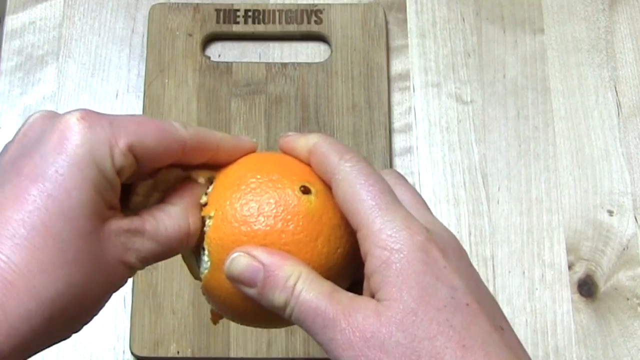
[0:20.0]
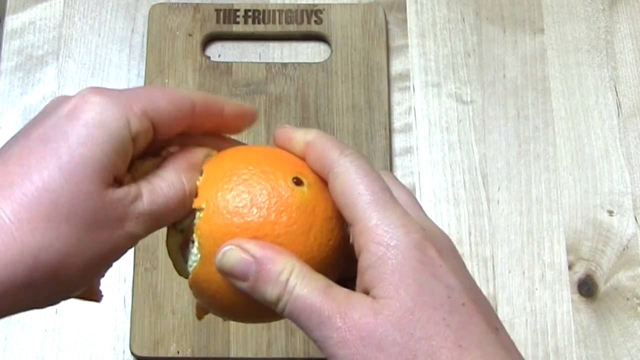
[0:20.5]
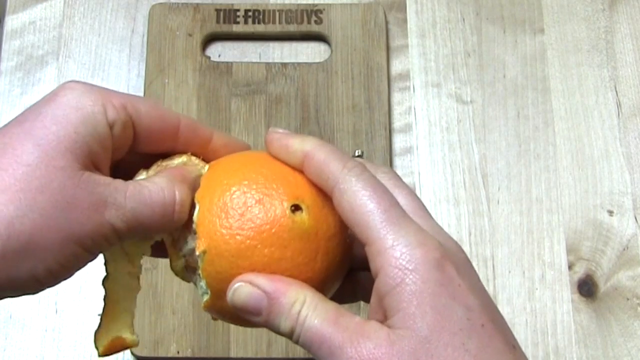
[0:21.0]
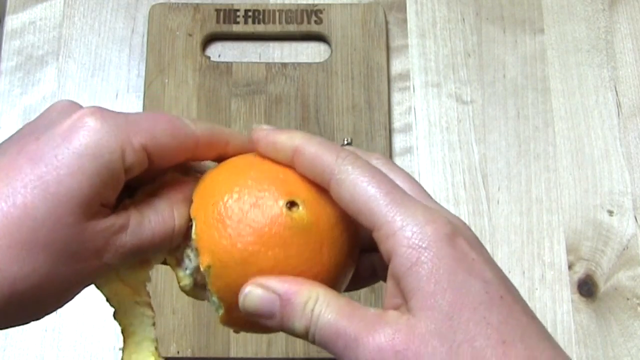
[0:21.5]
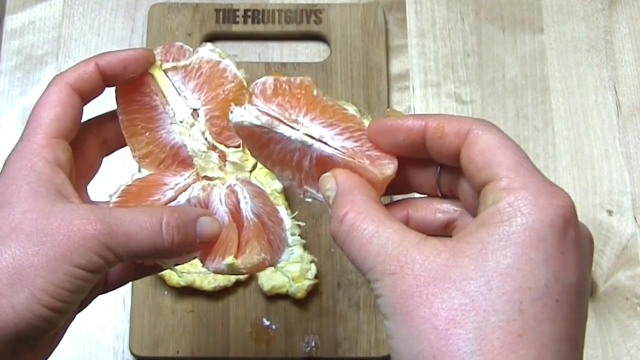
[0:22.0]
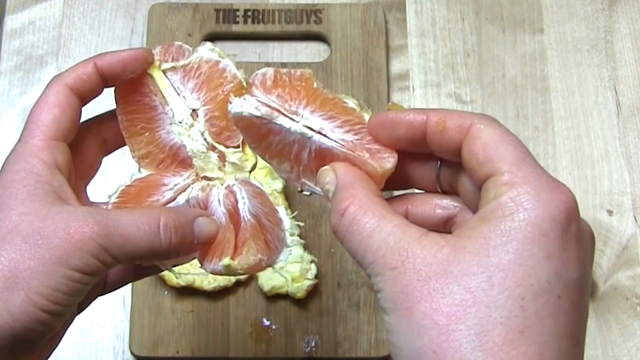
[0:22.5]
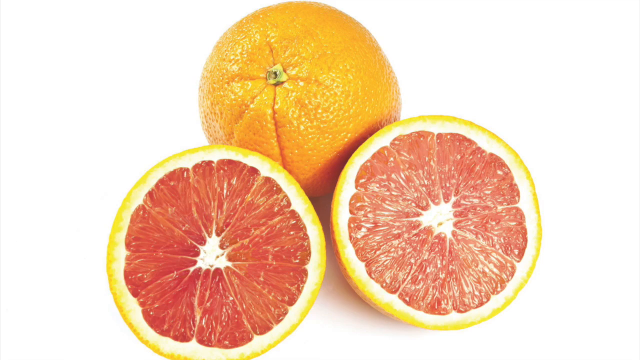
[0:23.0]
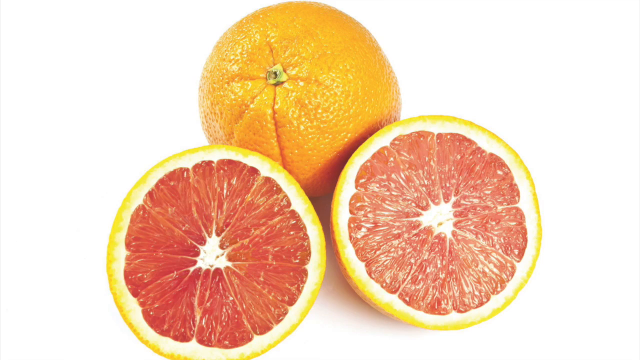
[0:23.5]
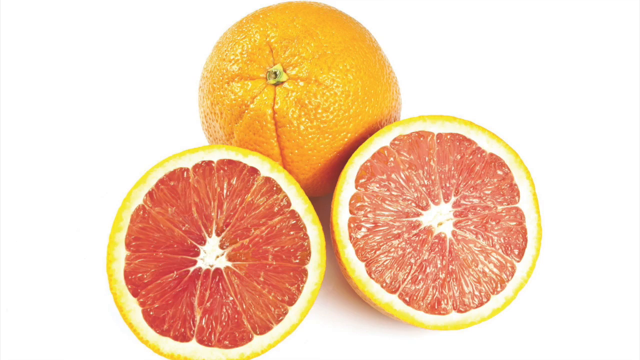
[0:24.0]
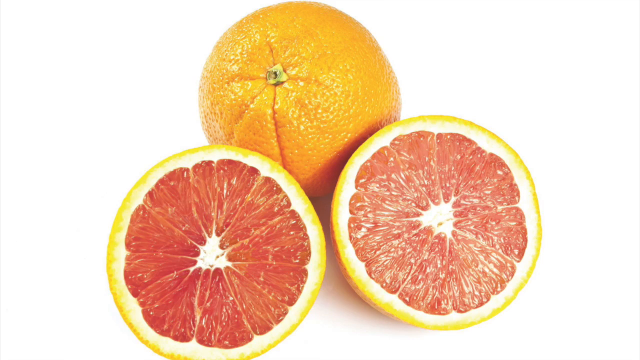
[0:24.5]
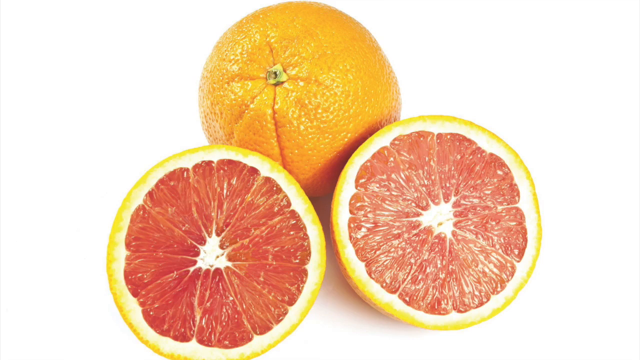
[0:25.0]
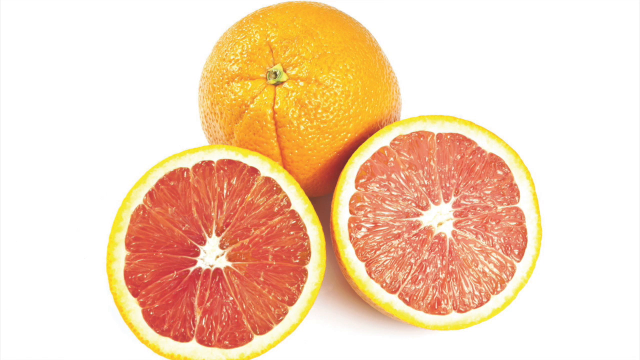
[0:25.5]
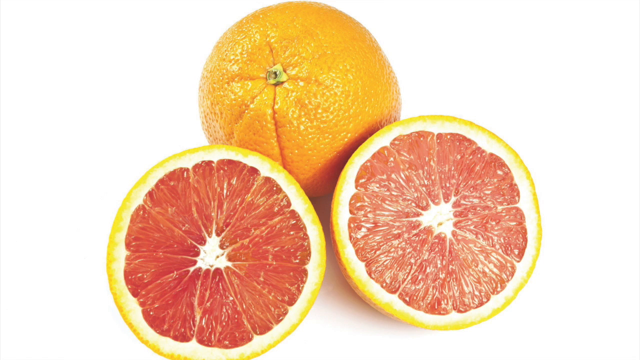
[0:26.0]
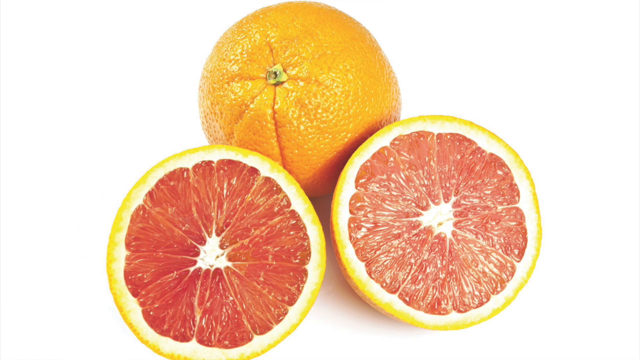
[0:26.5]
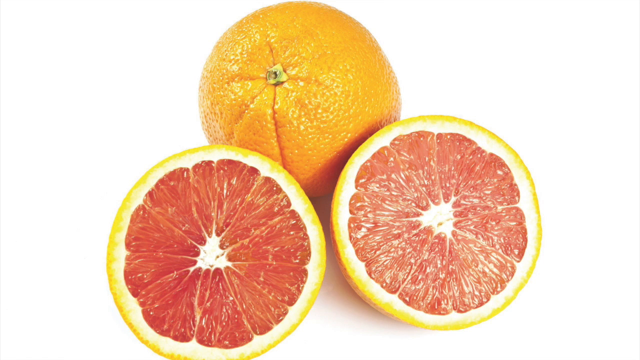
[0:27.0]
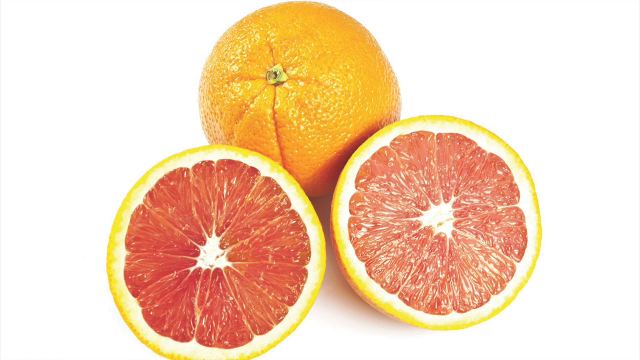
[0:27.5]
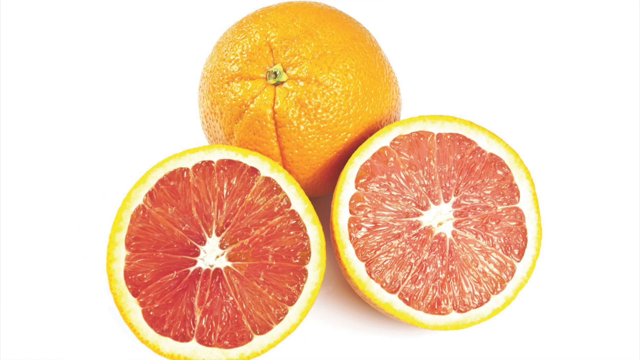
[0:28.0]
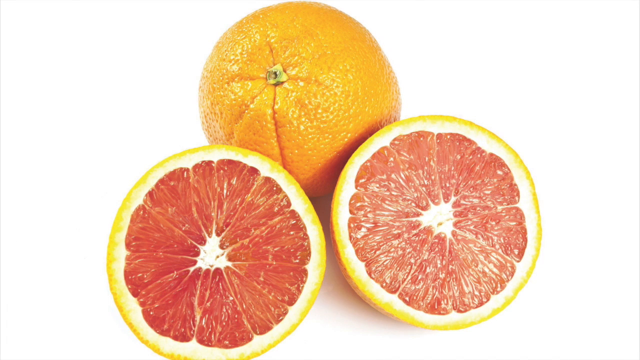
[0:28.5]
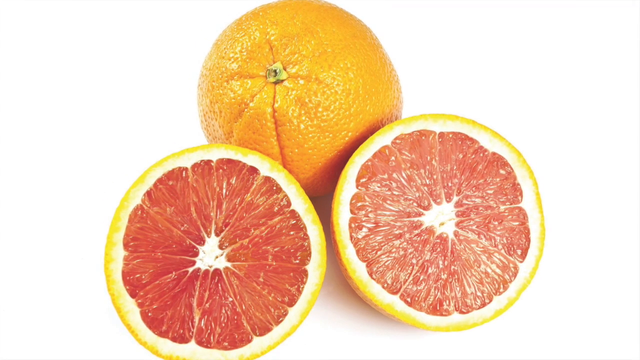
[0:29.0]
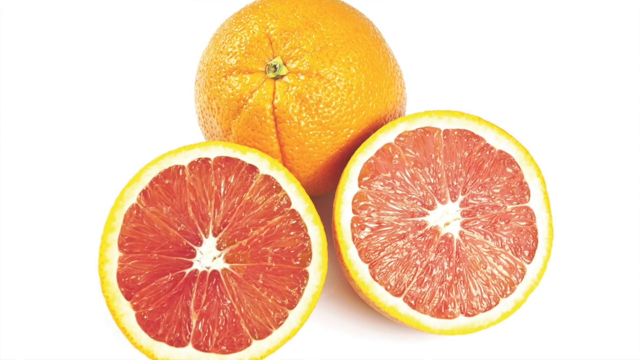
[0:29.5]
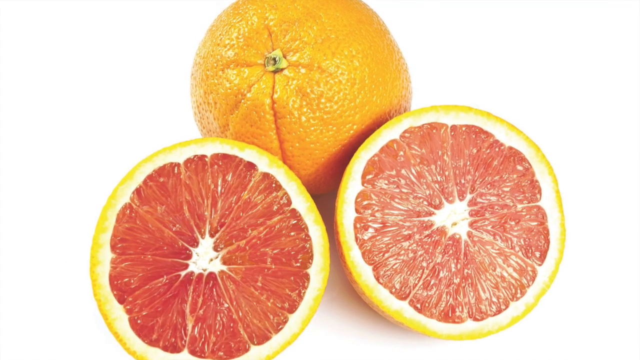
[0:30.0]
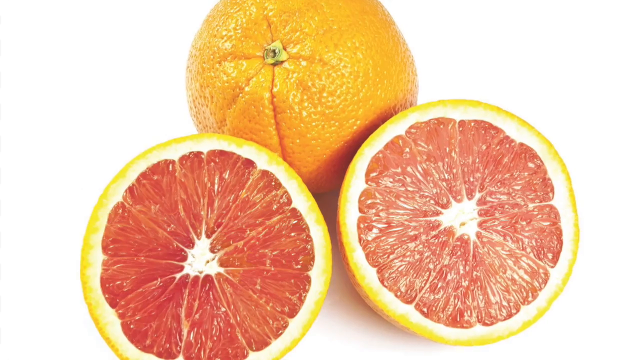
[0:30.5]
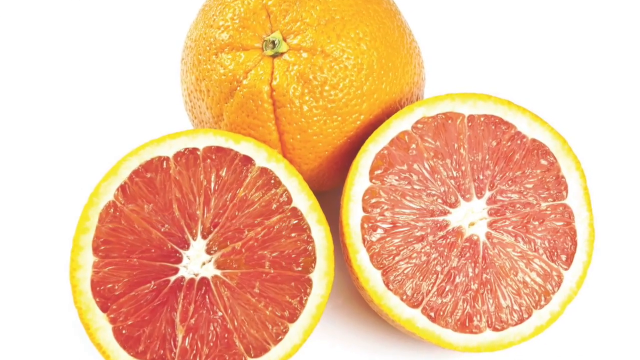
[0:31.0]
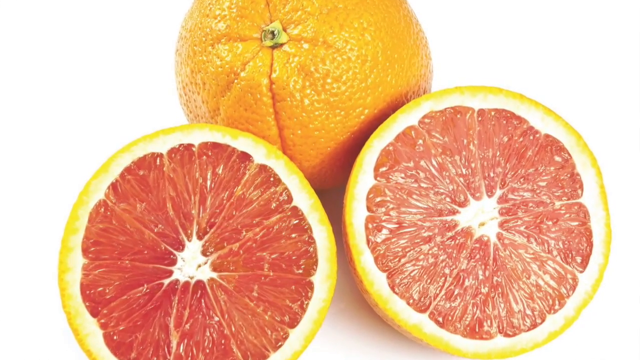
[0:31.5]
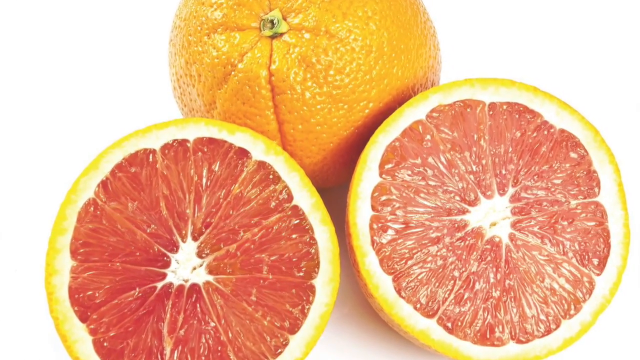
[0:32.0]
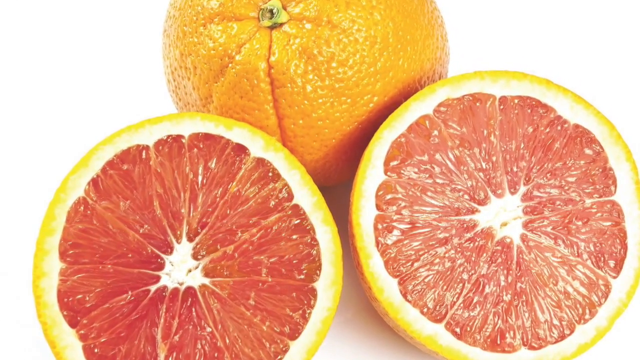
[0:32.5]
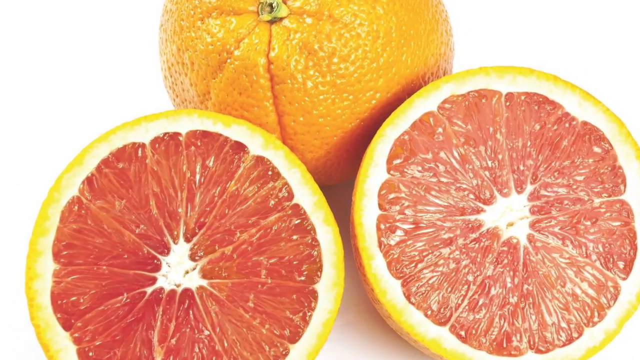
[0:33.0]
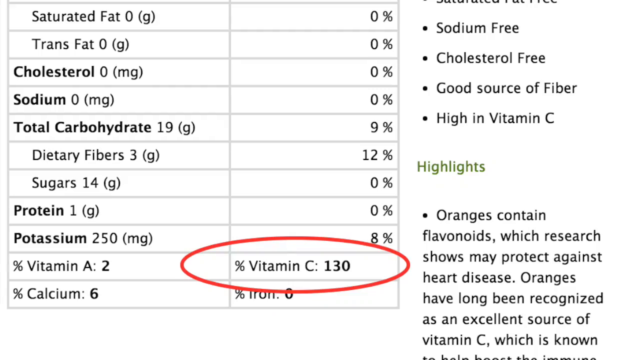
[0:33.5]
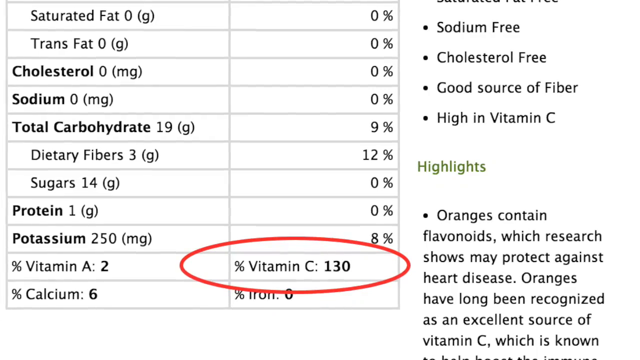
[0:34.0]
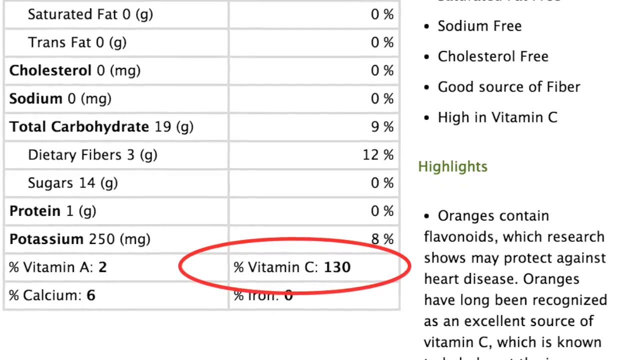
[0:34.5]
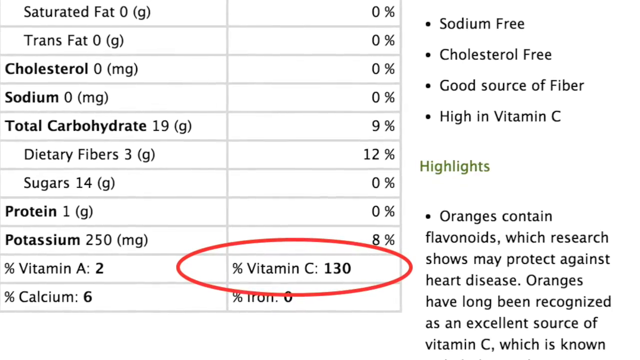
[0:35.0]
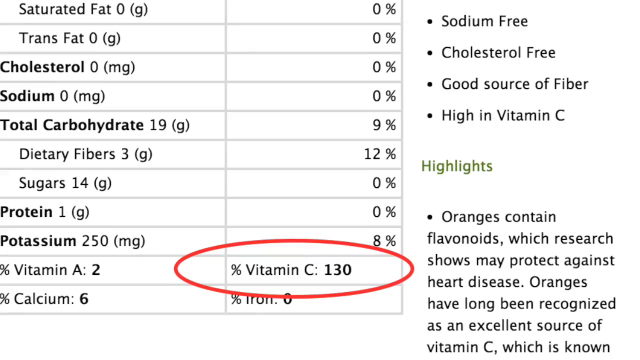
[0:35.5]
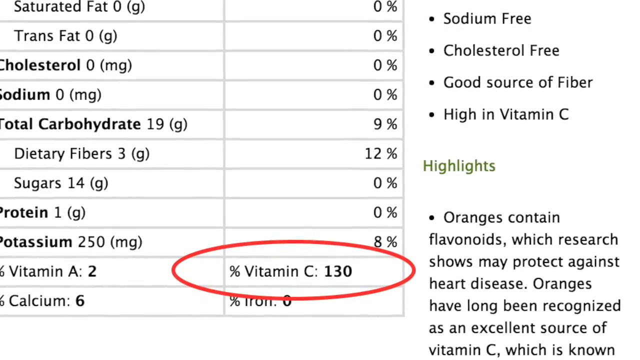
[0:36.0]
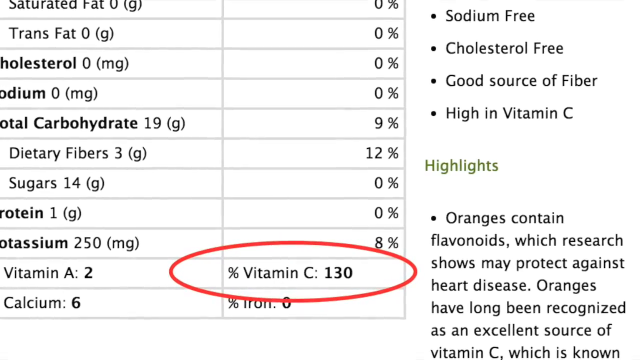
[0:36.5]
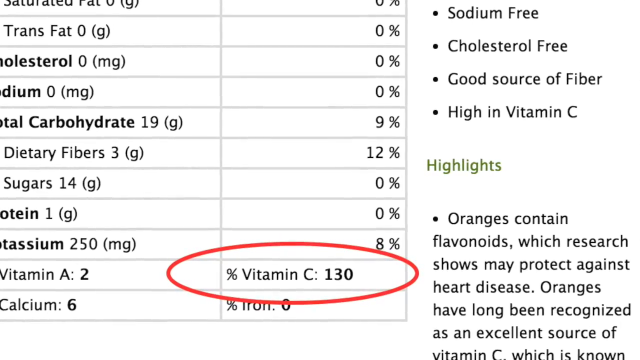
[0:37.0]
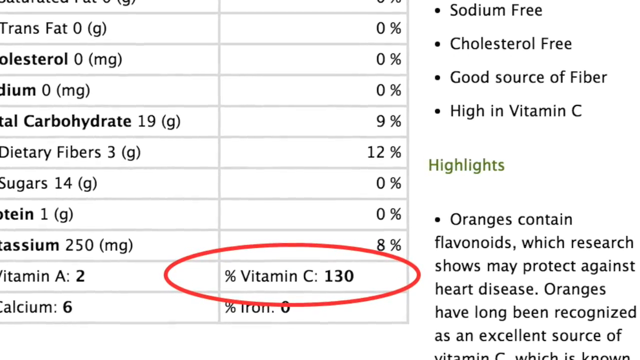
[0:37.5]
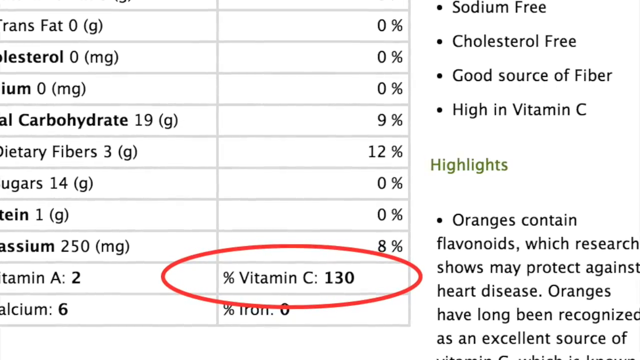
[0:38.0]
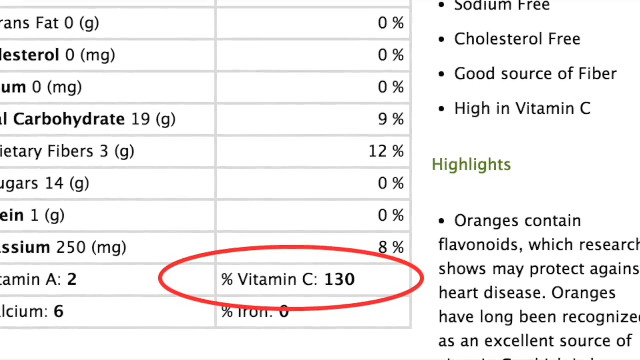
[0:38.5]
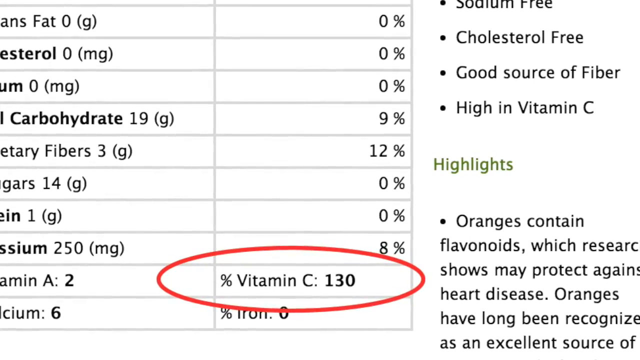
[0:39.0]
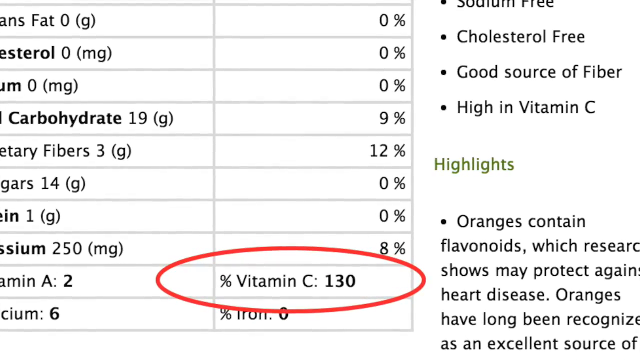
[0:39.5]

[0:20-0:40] A person's hands peel an orange over a wooden cutting board on a wooden table. The person has Caucasian skin with a slightly reddish tint and short fingernails. The fruit may actually be a grapefruit, as a picture of what looks like a ruby red grapefruit appears. A chart comes up listing calories, fat and other information for the two fruits shown, alongside segments of grapefruit whose insides are very juicy and glistening. The vitamin C level is circled with a red oval: the circled number for the grapefruit is 130, next to "percent vitamin C." The screen also says "sodium free," "cholesterol free," "good source of fiber" and "high in vitamin C."